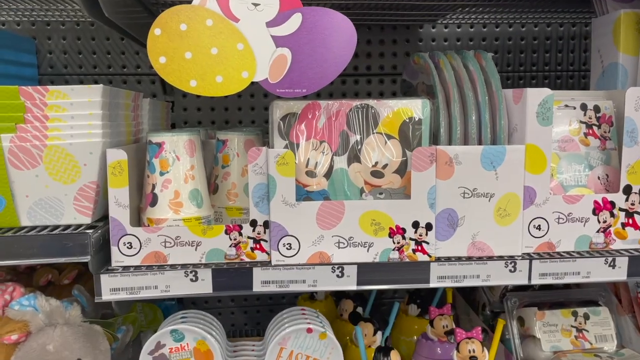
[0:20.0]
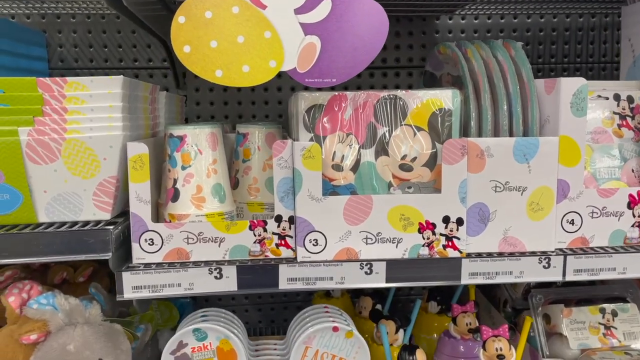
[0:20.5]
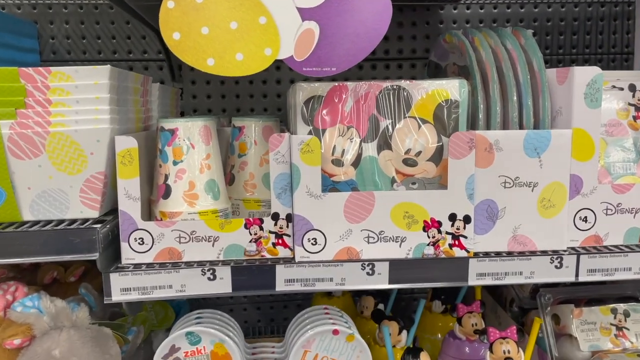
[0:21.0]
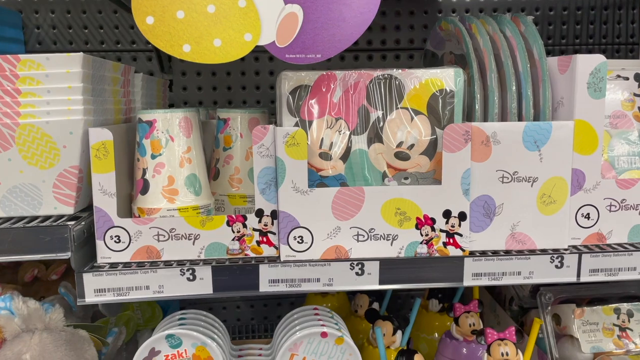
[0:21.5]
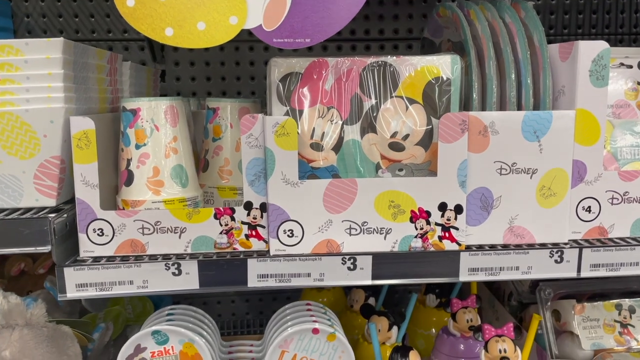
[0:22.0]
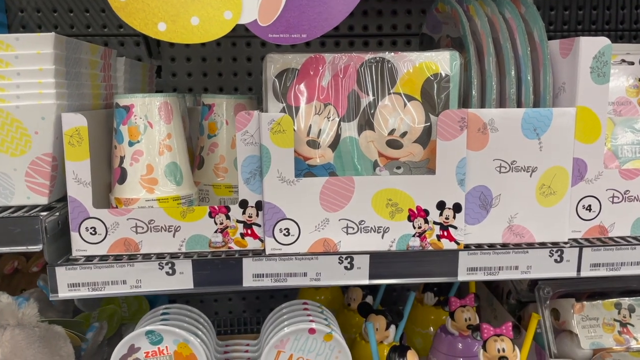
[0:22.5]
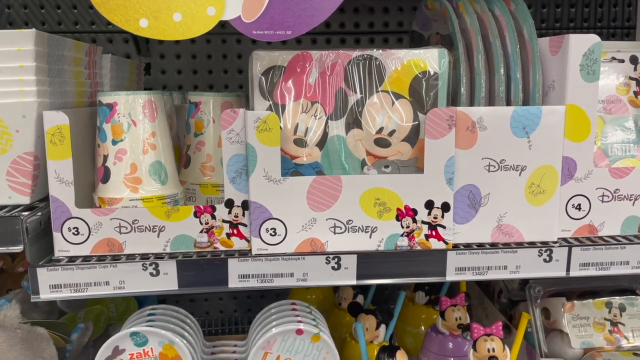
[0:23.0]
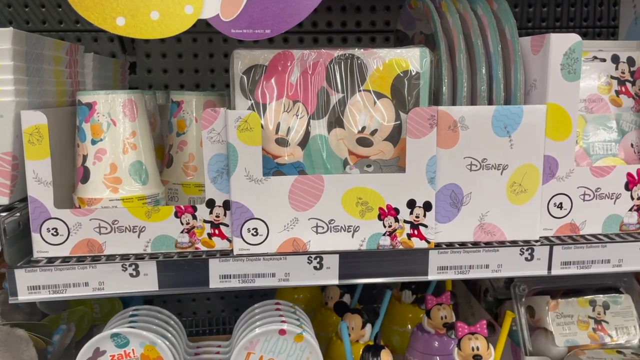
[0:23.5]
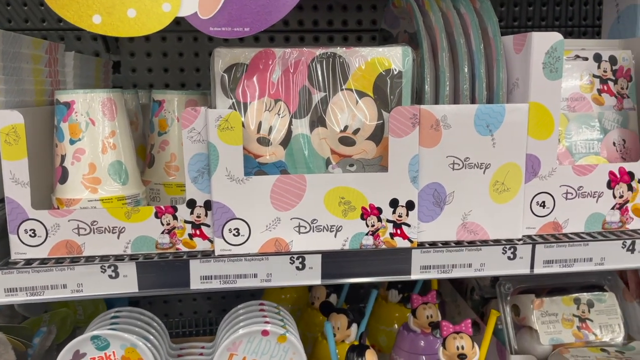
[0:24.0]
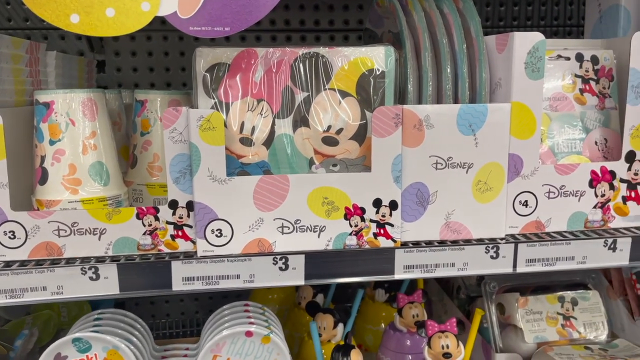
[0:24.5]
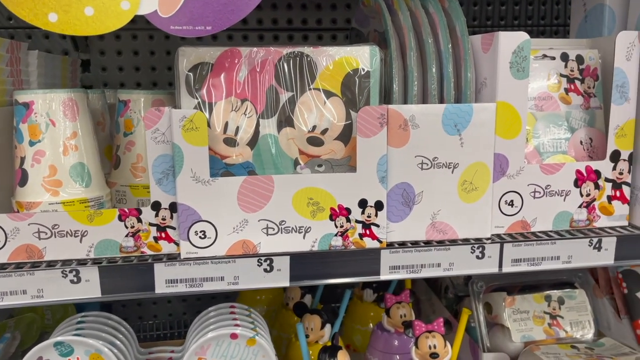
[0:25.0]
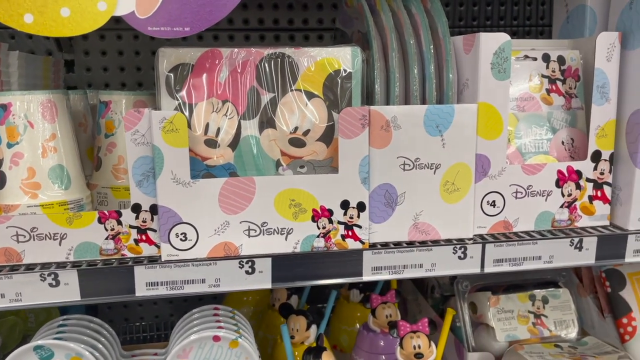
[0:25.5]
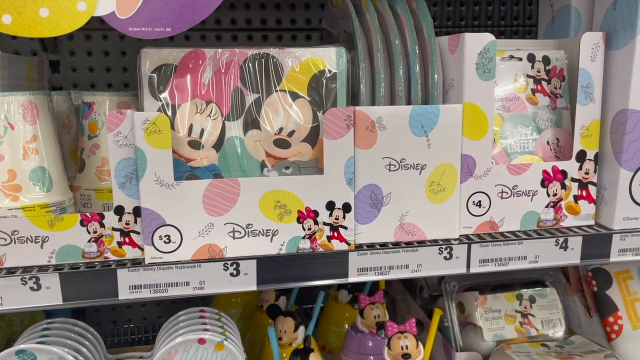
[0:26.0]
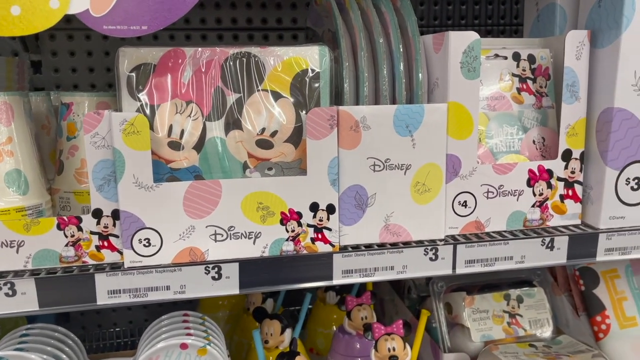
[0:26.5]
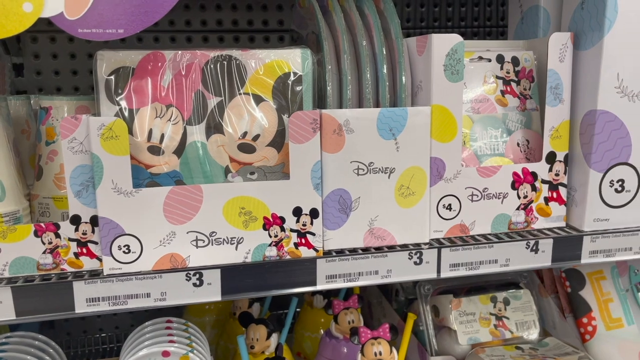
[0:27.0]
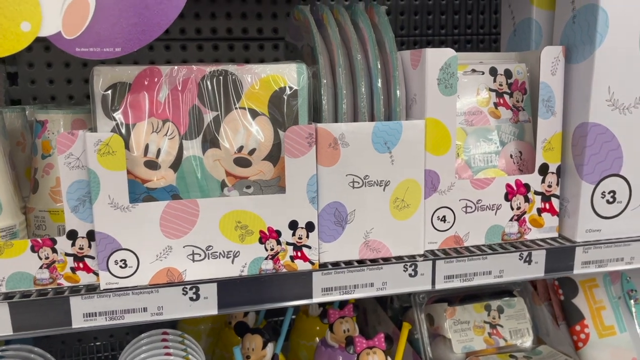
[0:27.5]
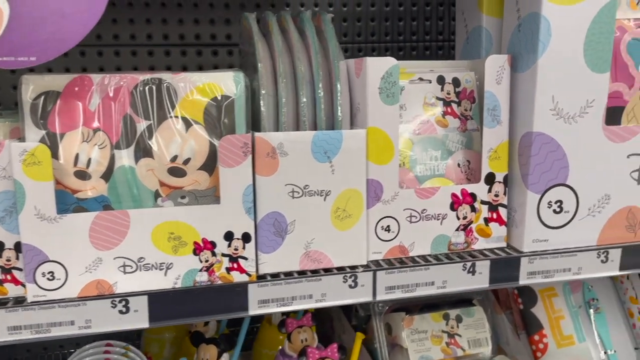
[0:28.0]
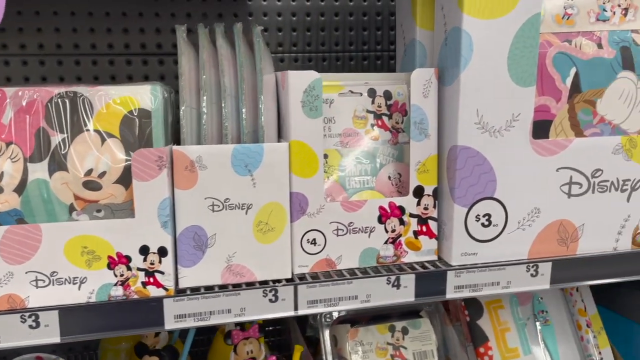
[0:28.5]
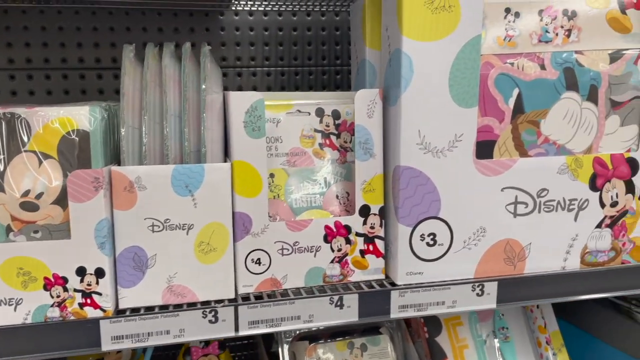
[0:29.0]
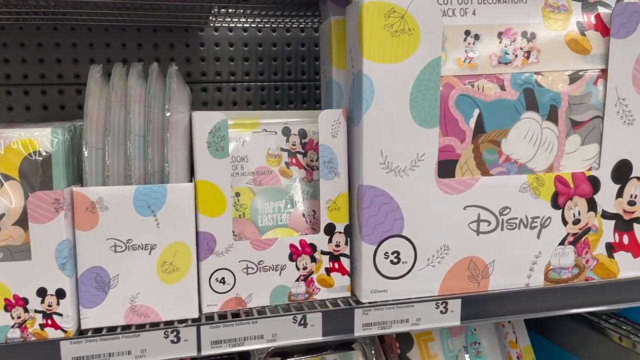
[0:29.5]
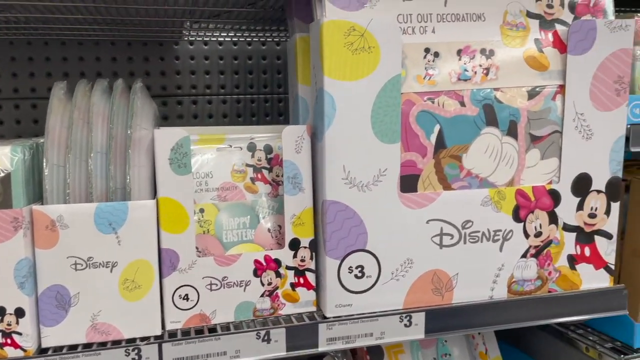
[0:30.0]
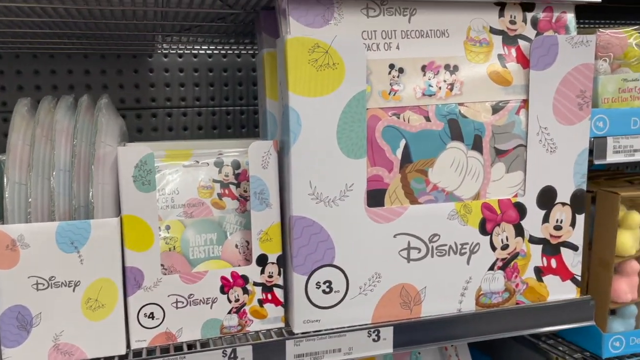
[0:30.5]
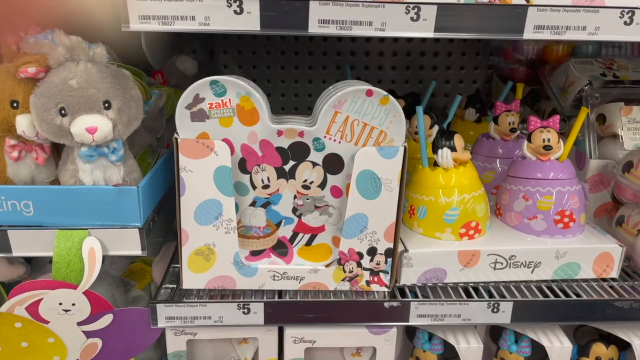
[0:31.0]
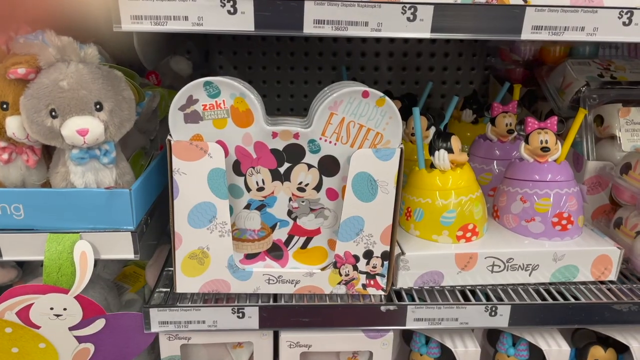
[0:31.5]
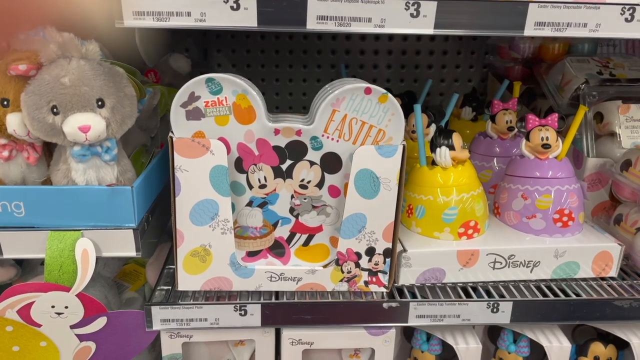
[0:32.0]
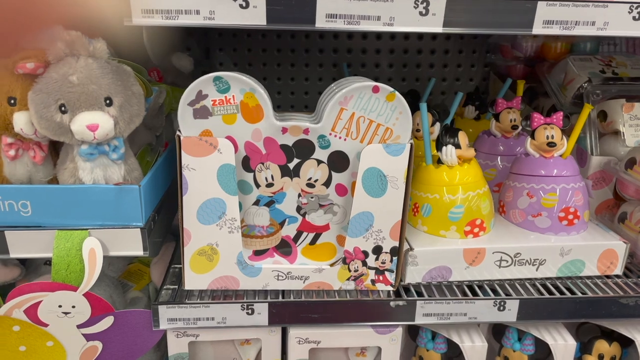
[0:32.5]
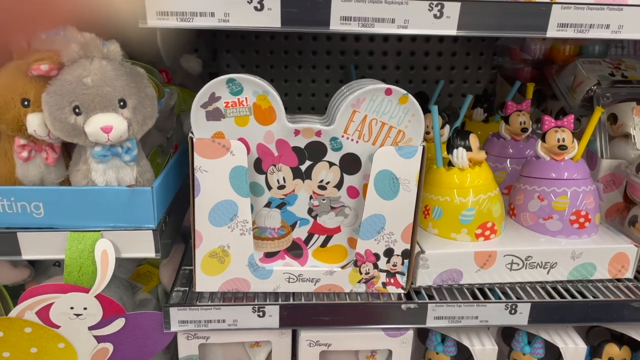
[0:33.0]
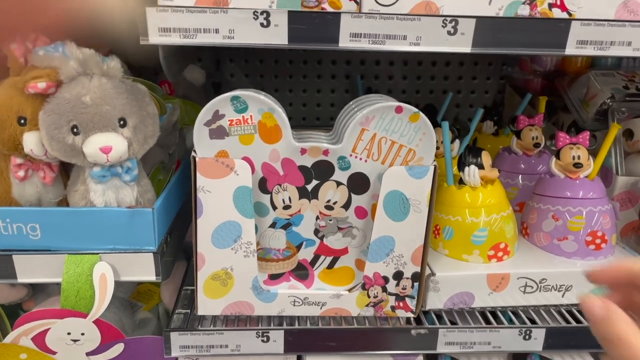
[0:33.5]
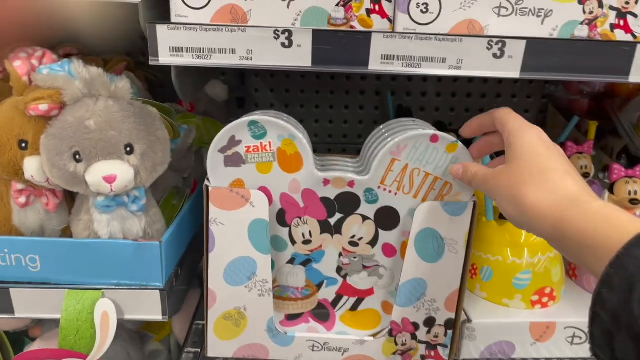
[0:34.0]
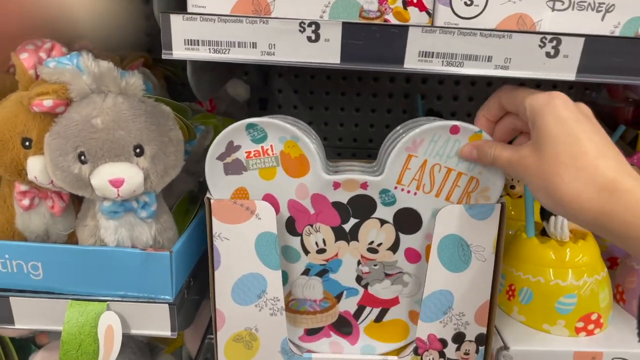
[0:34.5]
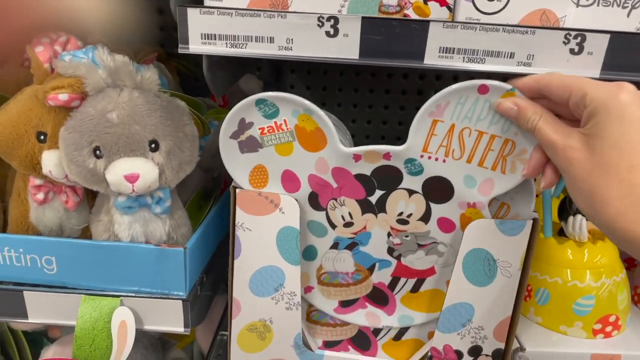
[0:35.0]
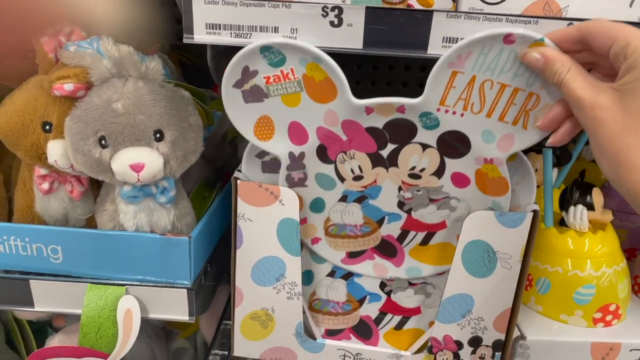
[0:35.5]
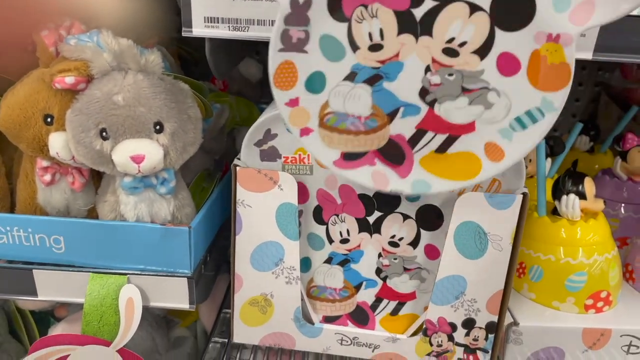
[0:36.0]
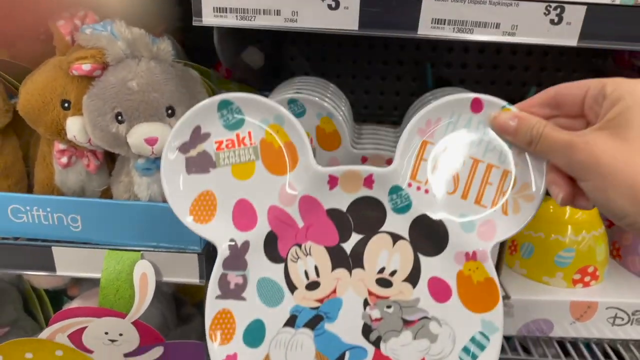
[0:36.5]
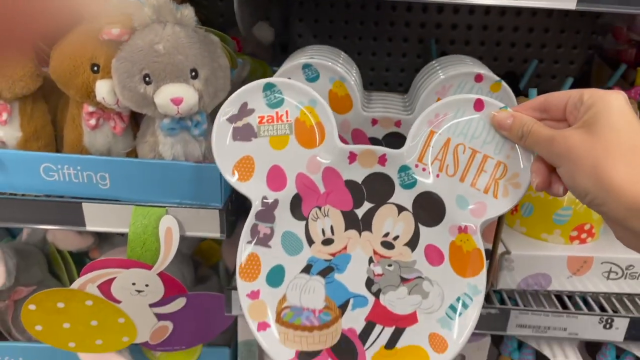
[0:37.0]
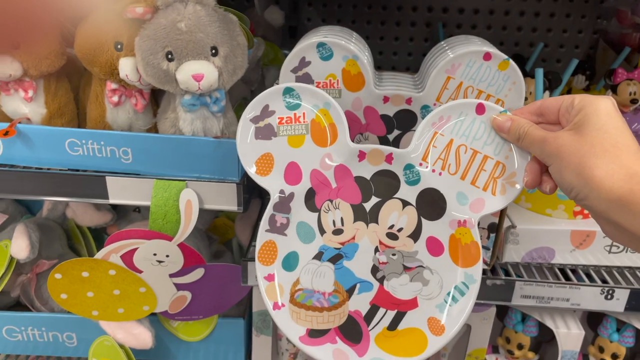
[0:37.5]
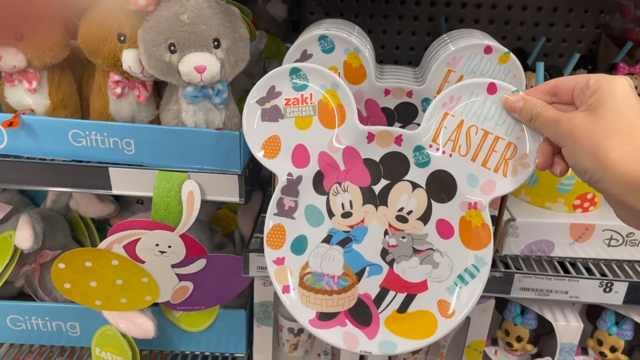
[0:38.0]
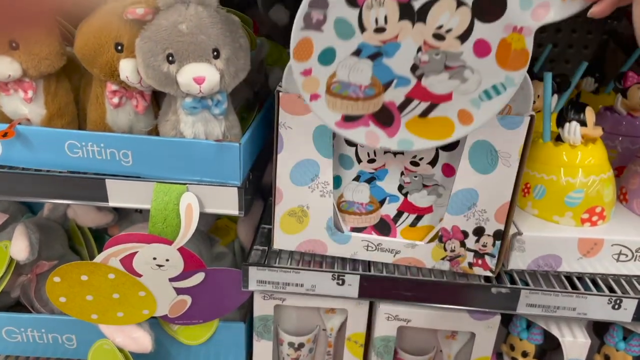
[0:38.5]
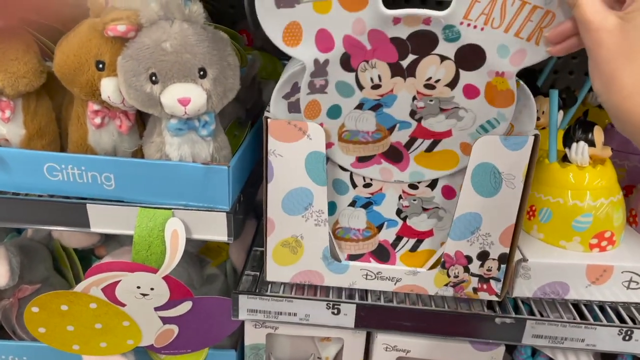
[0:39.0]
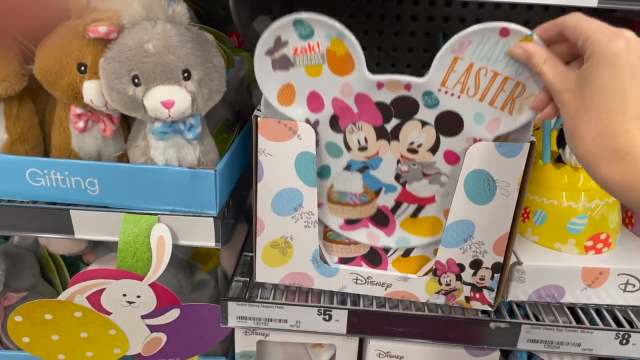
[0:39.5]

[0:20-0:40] More Disney products are shown zoomed in, with the camera panning to the right across them. Easter-specific Disney products with Mickey Mouse-shaped ears appear, possibly a celebration Easter plate. Other products are also visible, including what look like plush animal toys to the left and more Disney products with prices listed. No people are shown, and the setting stays the same as the camera pans between Disney products and other items in the toy section aisles.